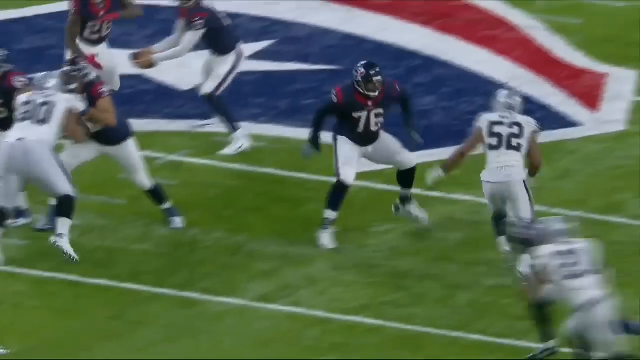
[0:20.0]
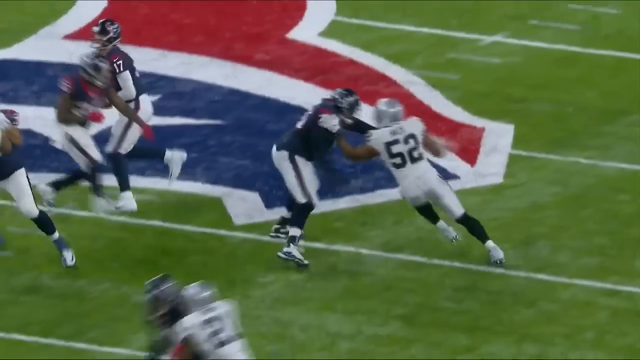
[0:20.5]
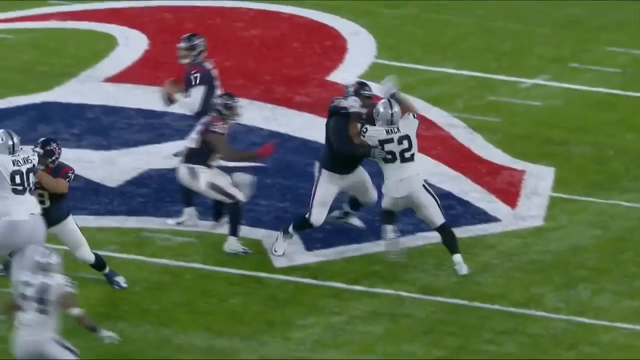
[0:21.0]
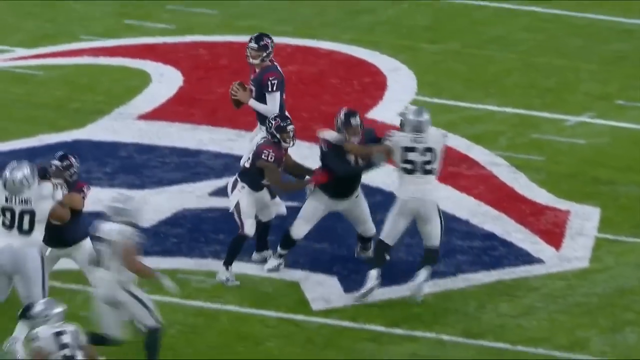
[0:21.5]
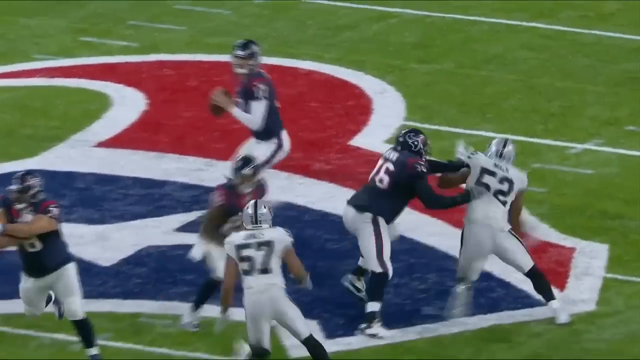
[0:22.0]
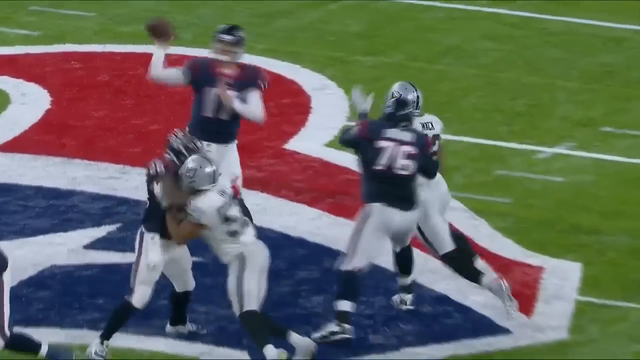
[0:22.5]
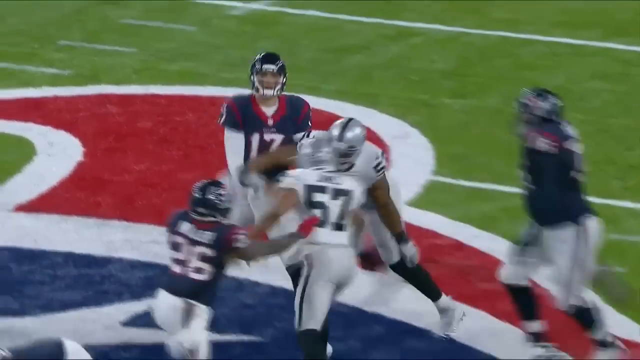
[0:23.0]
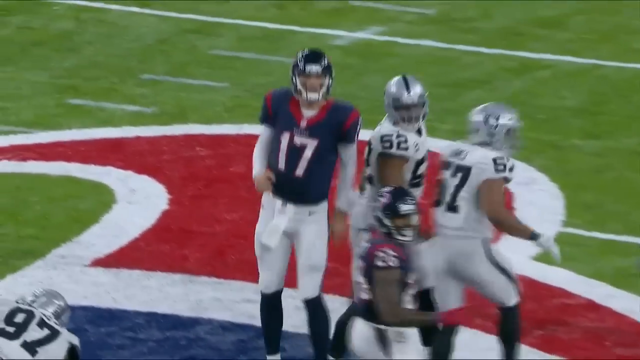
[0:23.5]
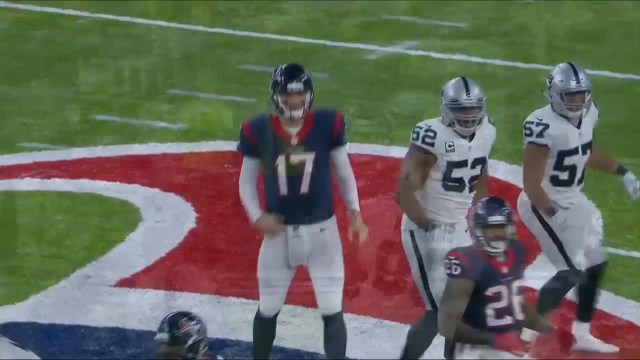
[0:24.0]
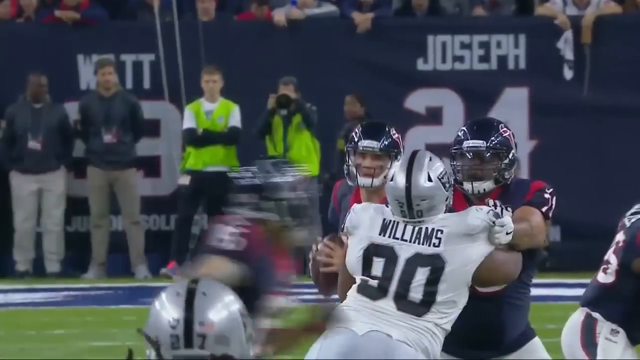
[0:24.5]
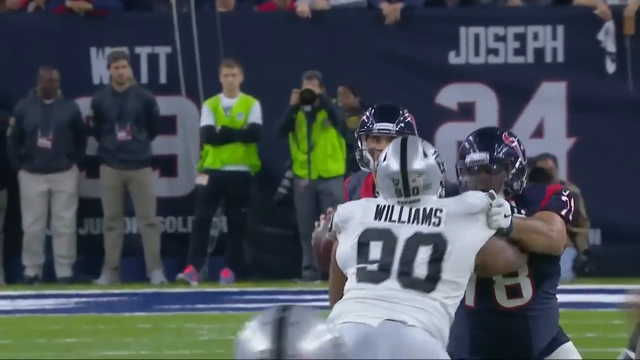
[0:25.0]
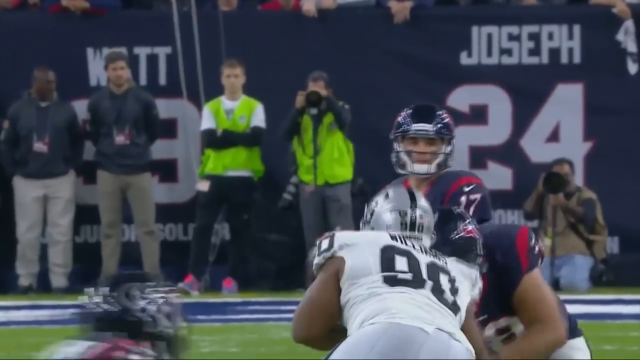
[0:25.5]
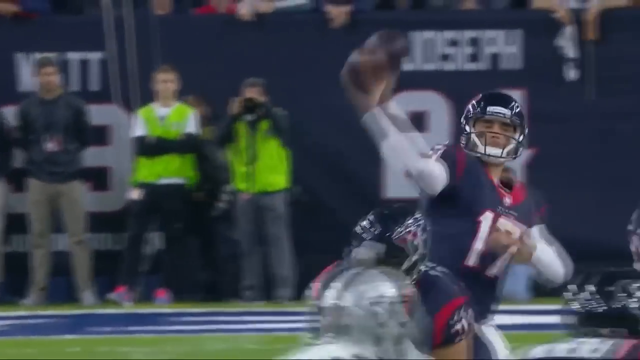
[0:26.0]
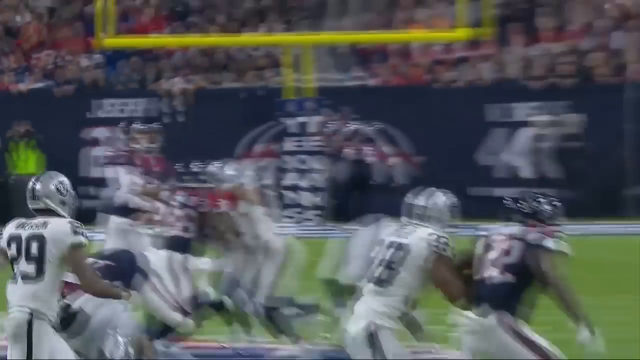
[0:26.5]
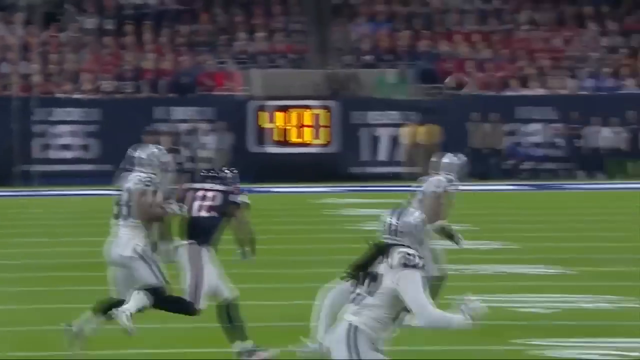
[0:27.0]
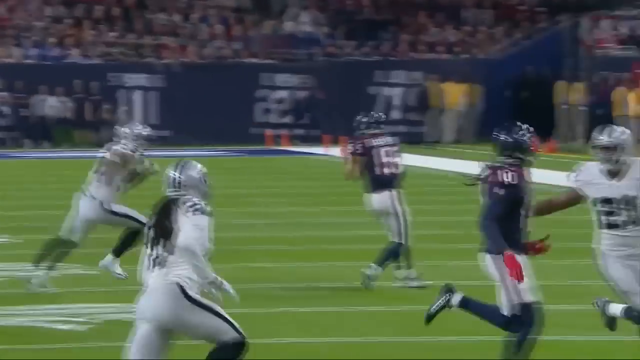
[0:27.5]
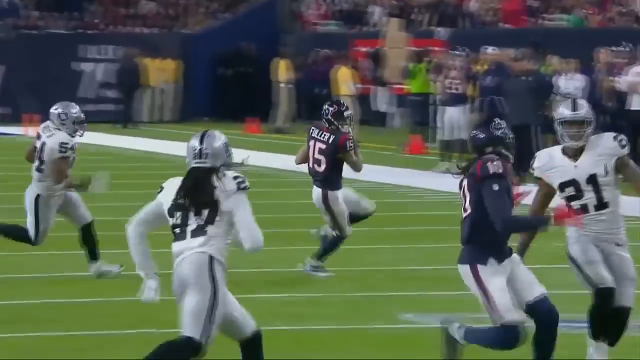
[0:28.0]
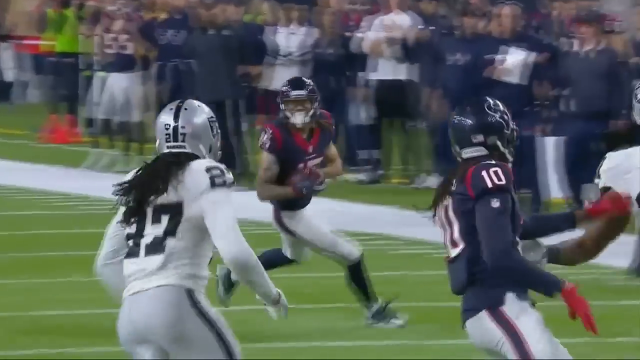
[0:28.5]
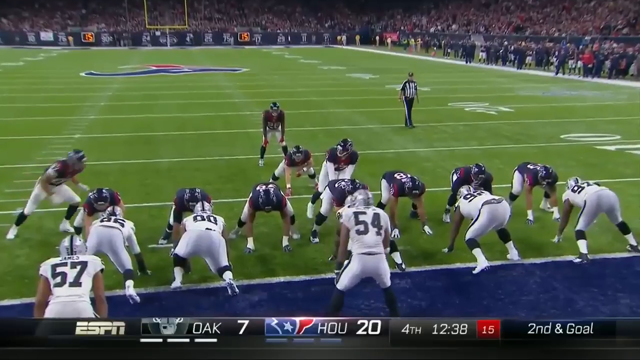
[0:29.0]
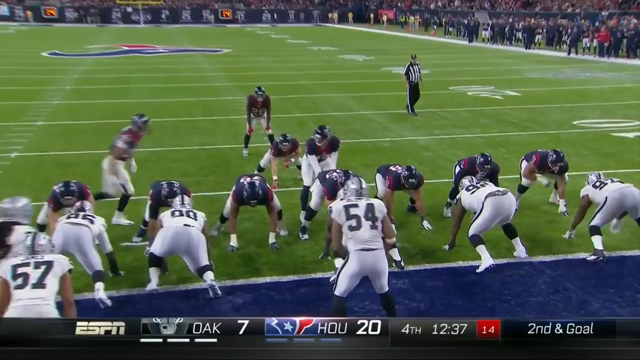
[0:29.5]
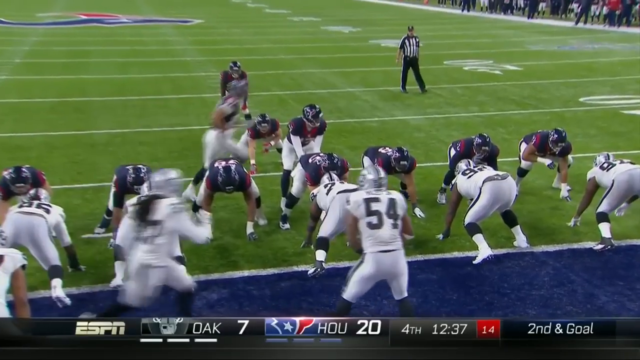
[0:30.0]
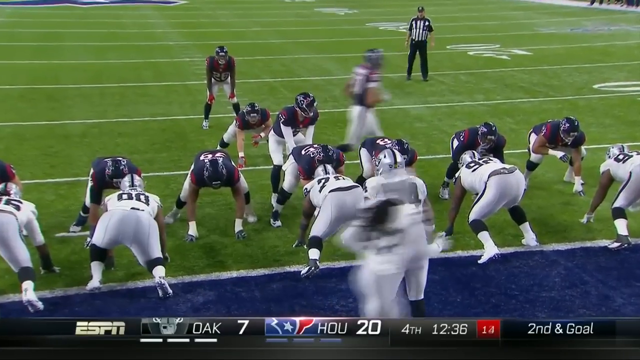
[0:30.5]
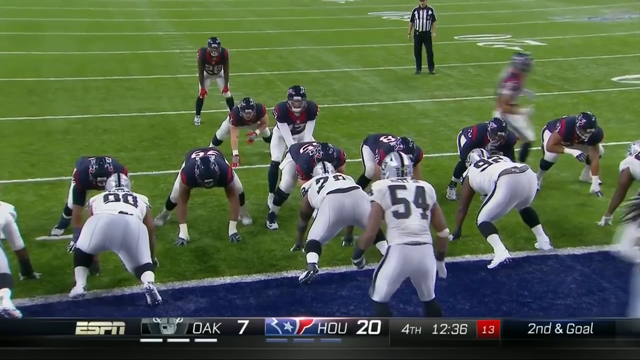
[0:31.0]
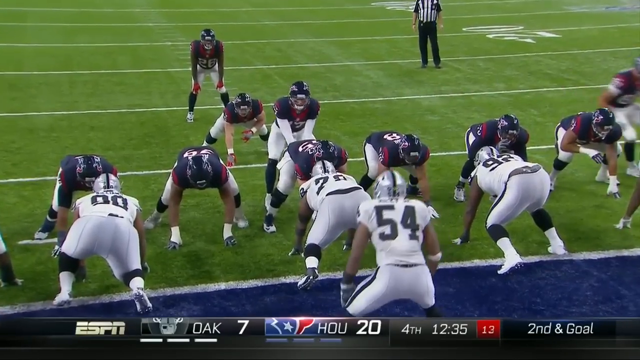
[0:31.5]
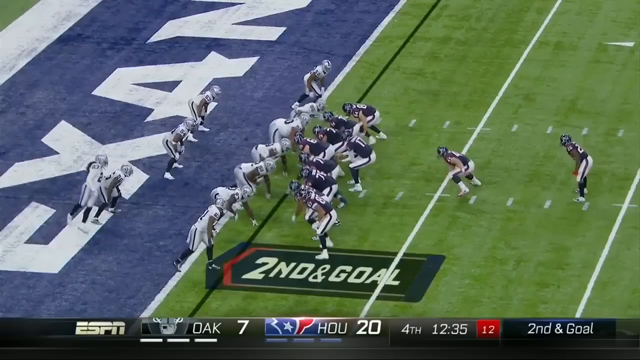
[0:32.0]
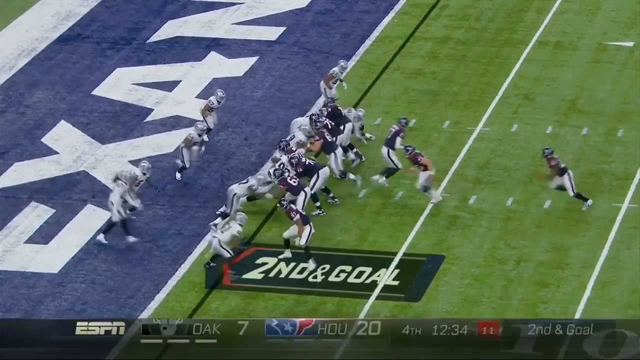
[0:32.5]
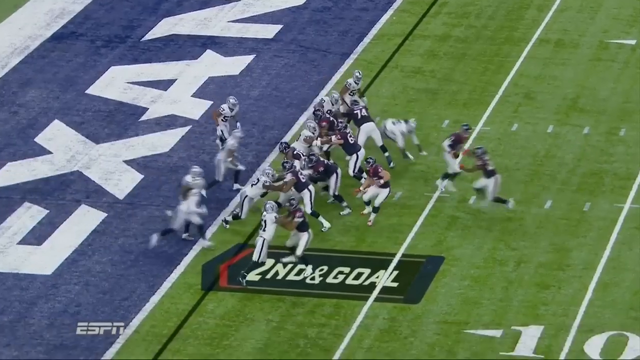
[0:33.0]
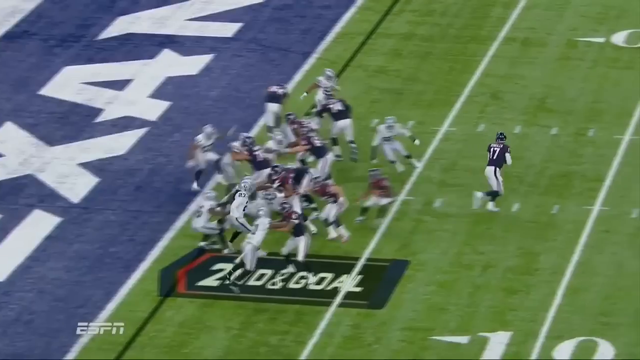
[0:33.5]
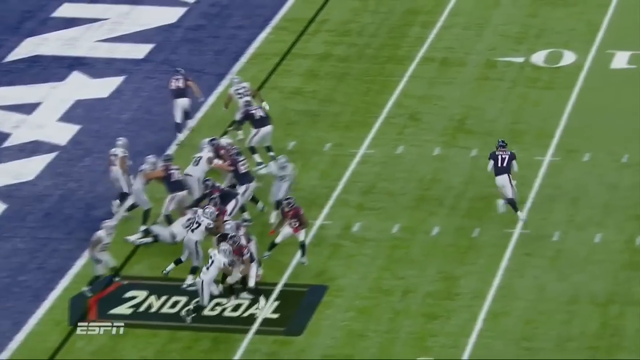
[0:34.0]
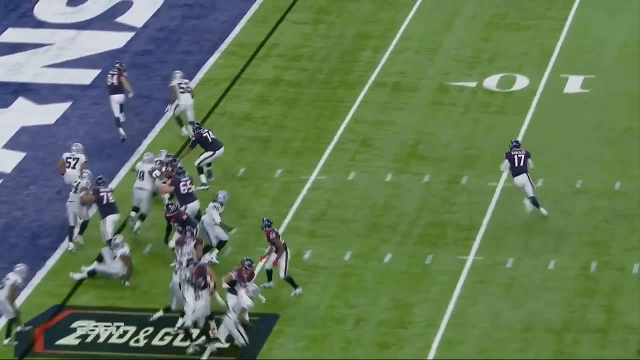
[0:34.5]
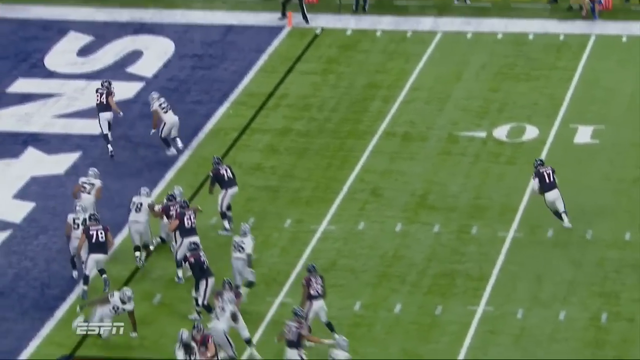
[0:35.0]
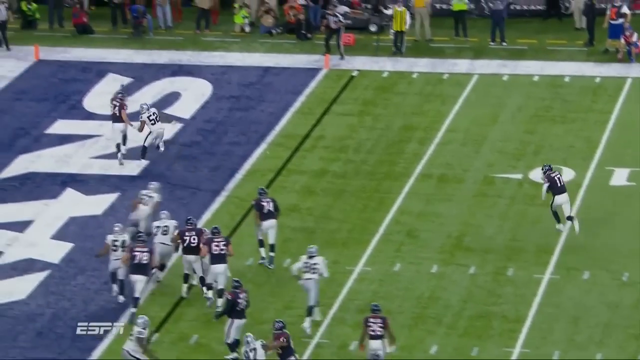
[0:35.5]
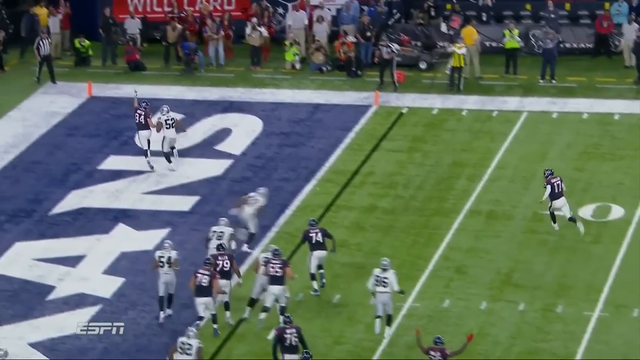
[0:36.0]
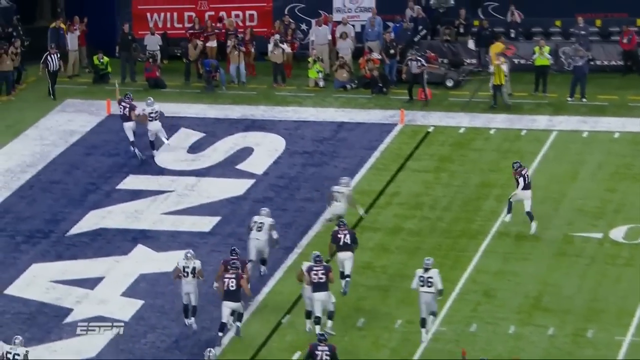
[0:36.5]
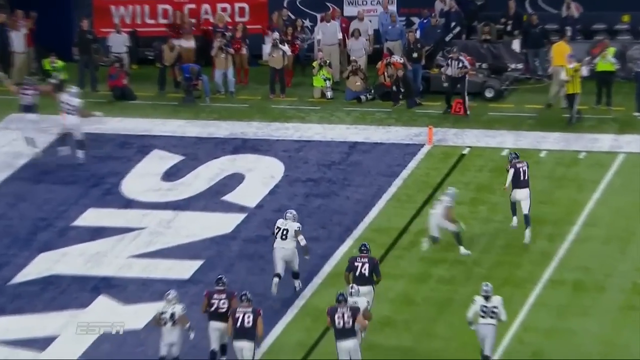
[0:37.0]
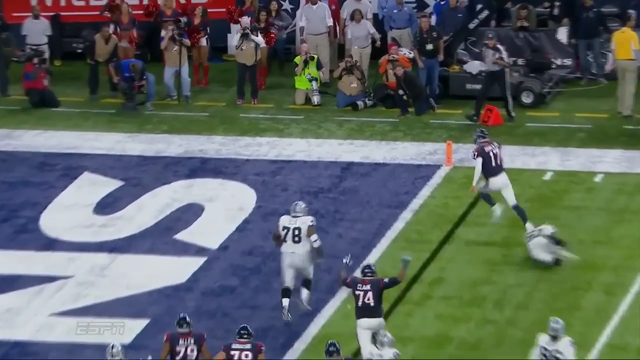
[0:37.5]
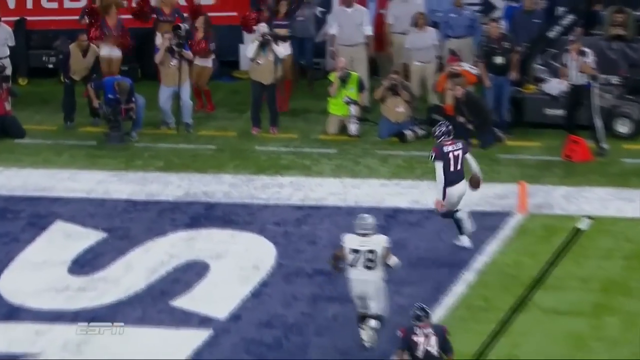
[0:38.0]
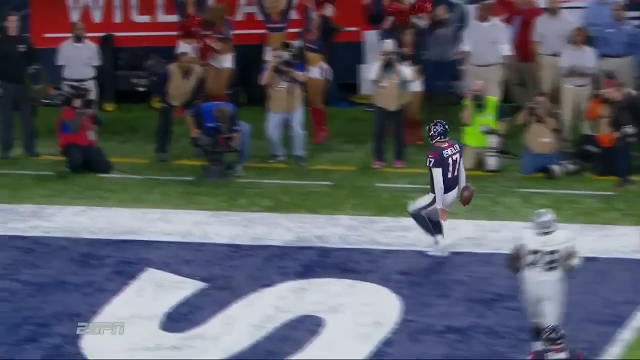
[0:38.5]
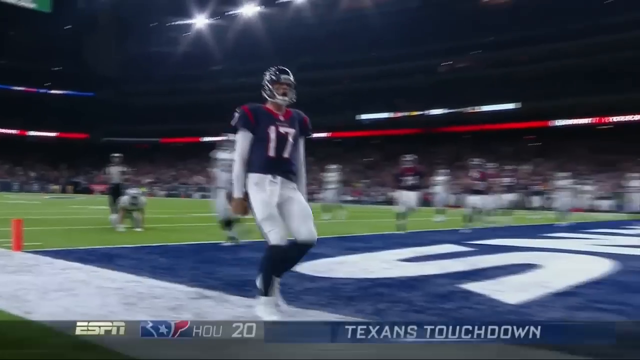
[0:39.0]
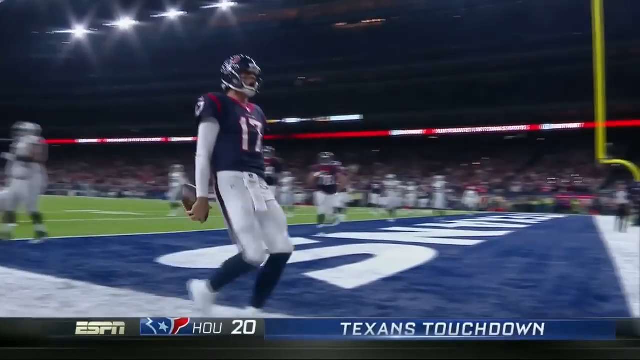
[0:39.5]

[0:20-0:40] The teams fight for the ball on the pitch, which is marked green. Players run; one runs holding the rugby ball, and another throws the ball. Referees are inside the ground; one has his hands in his pockets and wears black trousers and a striped shirt. Spectators watch, wearing red and green, some in green reflectors. Red logos reading "wildcards" are visible. The teams throw the ball all over and race against each other; one team wears white and the other wears navy blue with maroon on the hand. The players have different numbers on their shirts.